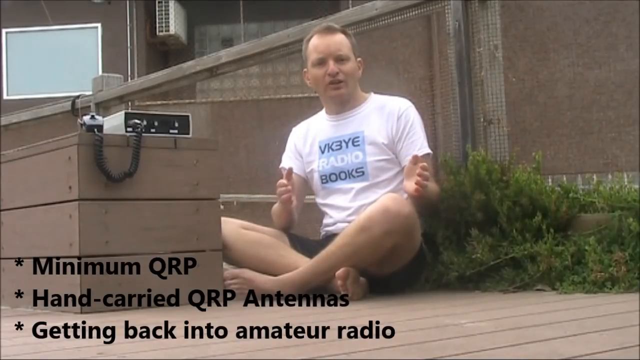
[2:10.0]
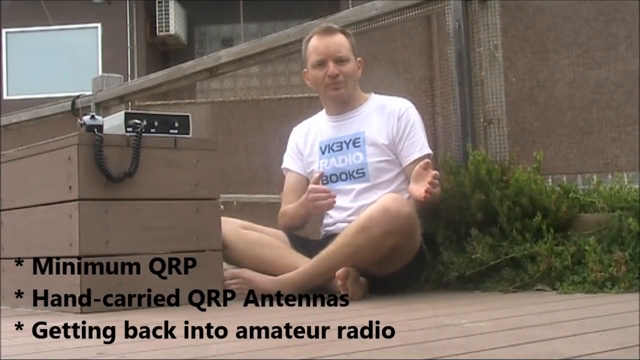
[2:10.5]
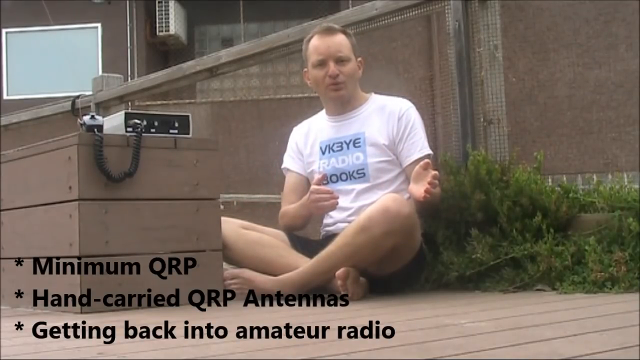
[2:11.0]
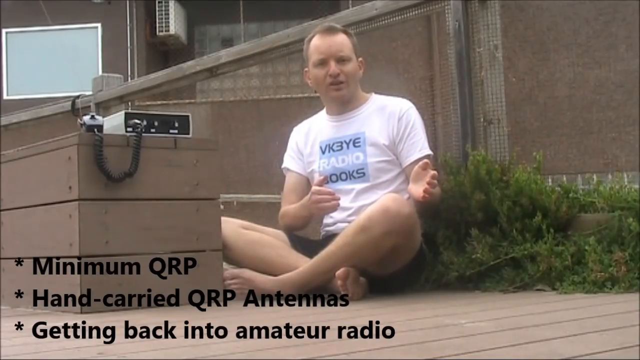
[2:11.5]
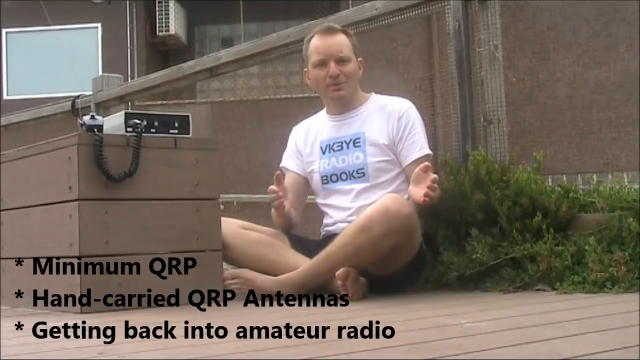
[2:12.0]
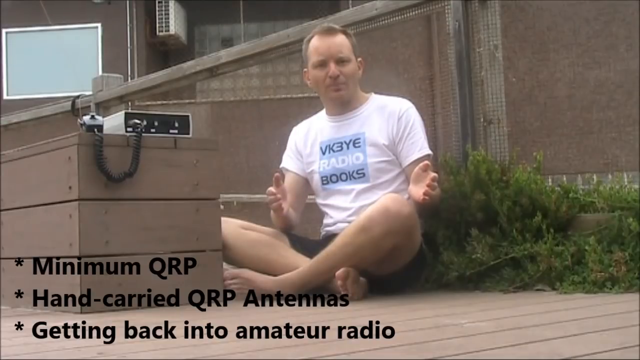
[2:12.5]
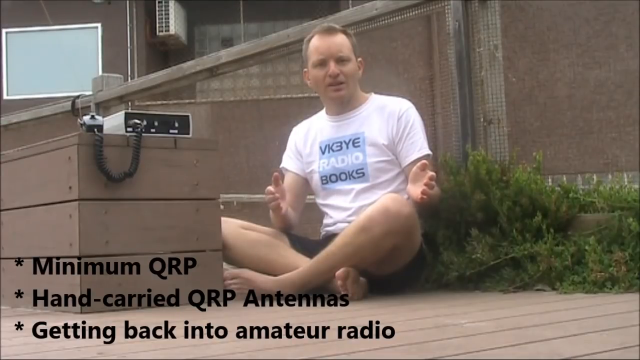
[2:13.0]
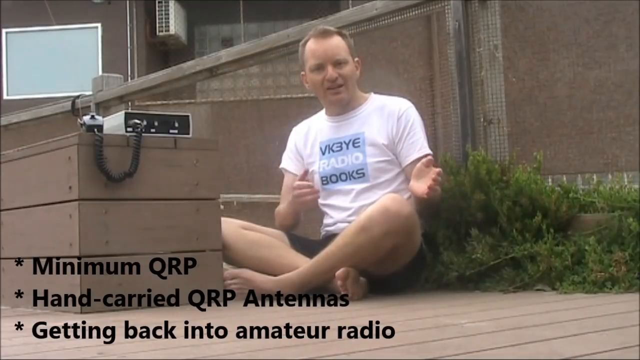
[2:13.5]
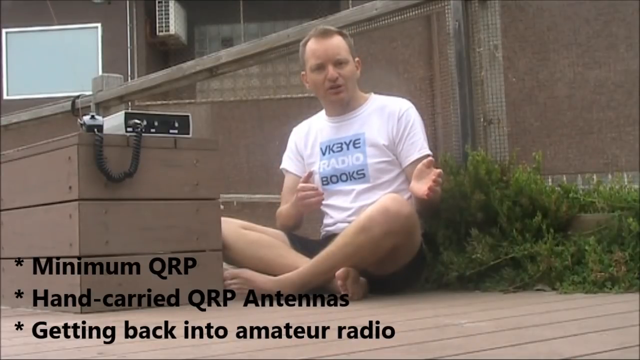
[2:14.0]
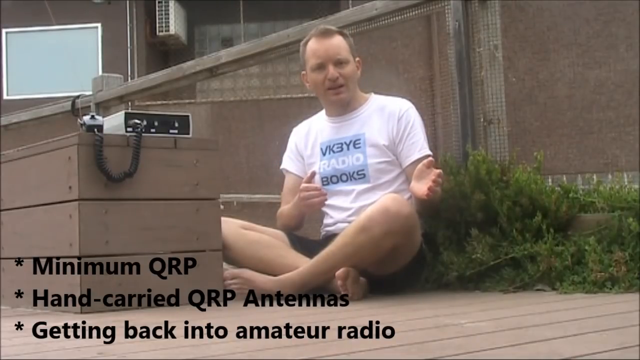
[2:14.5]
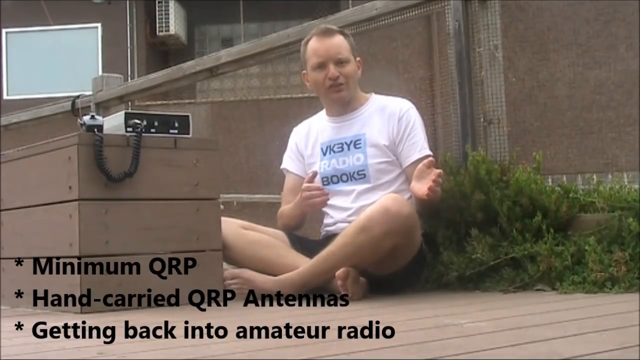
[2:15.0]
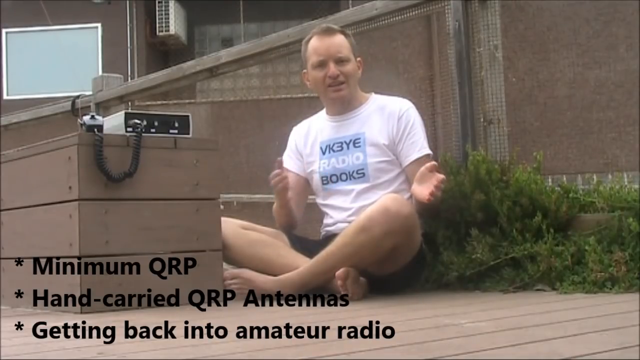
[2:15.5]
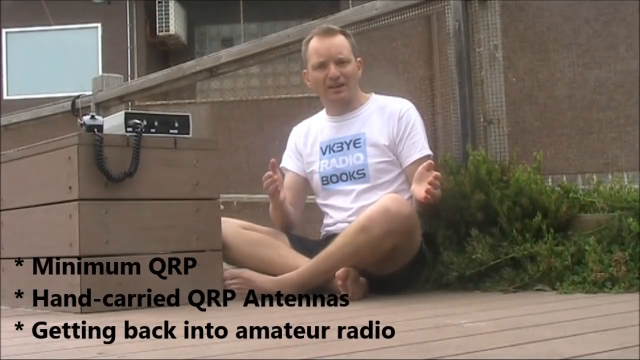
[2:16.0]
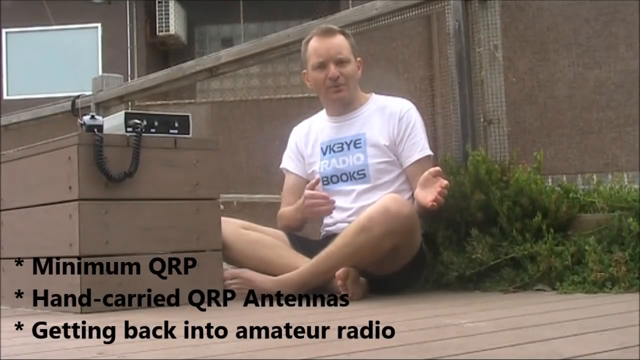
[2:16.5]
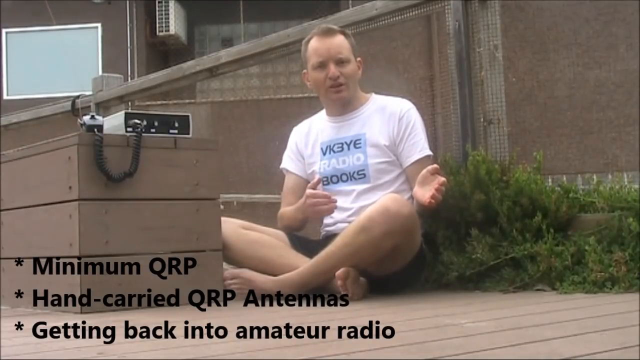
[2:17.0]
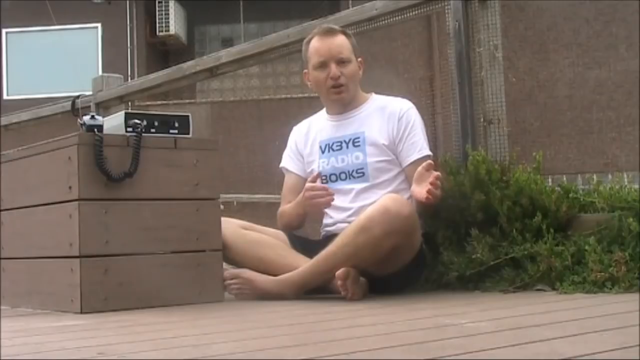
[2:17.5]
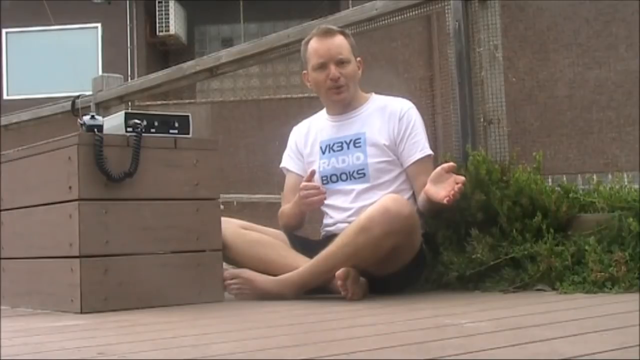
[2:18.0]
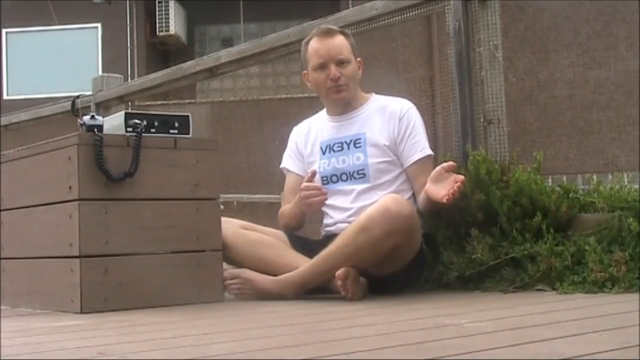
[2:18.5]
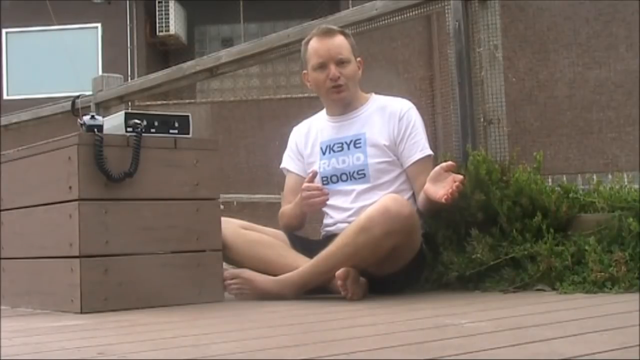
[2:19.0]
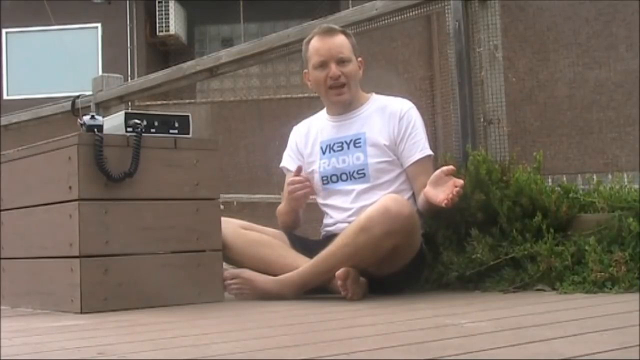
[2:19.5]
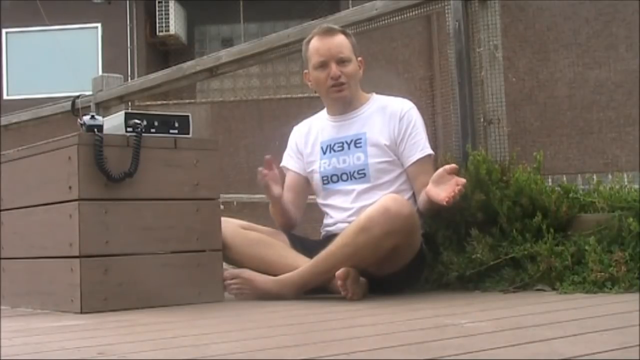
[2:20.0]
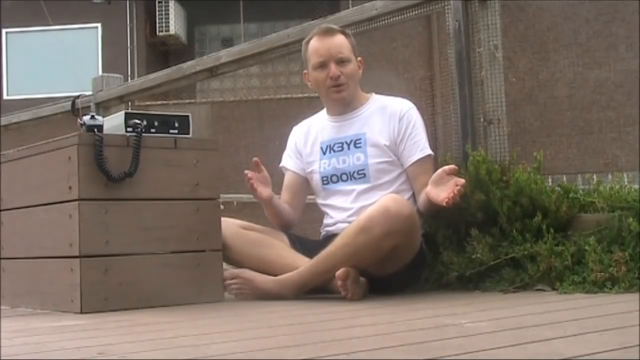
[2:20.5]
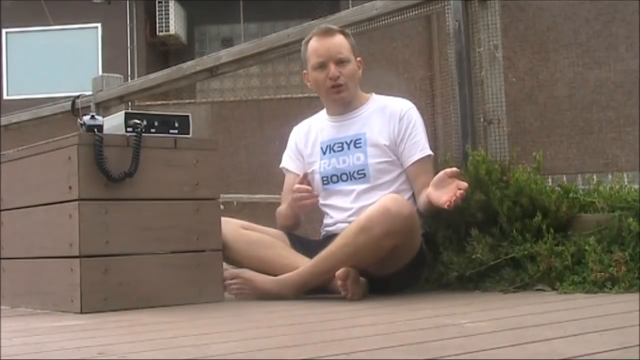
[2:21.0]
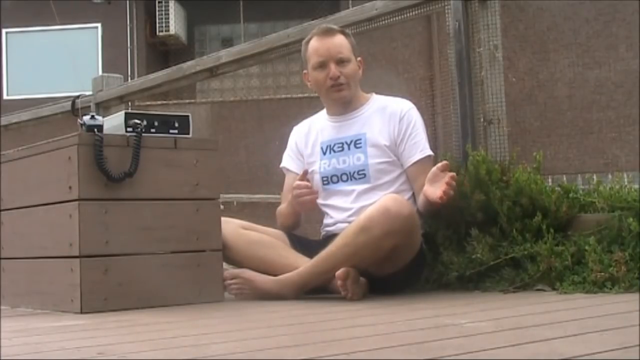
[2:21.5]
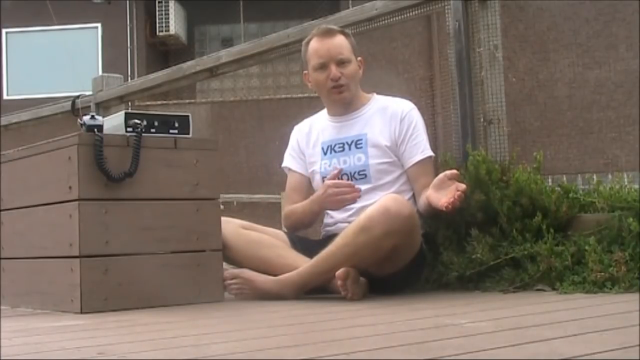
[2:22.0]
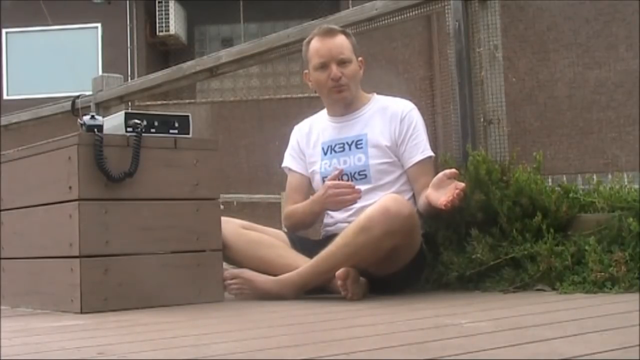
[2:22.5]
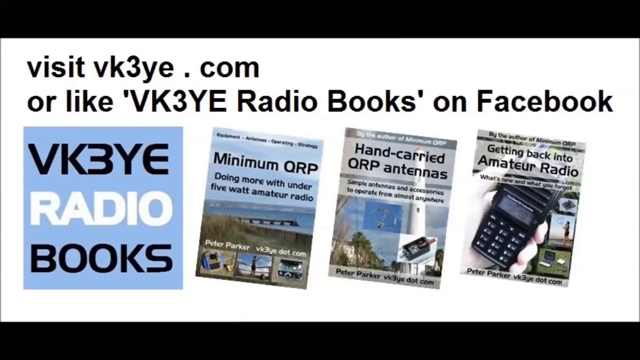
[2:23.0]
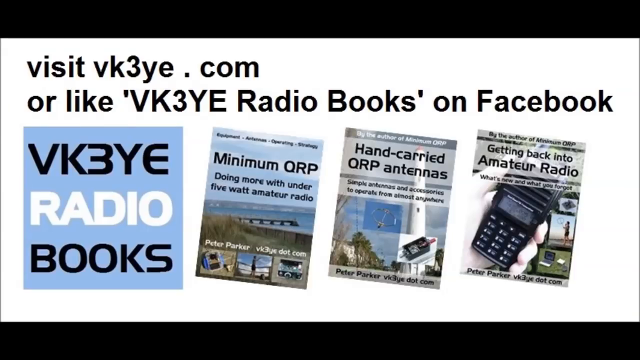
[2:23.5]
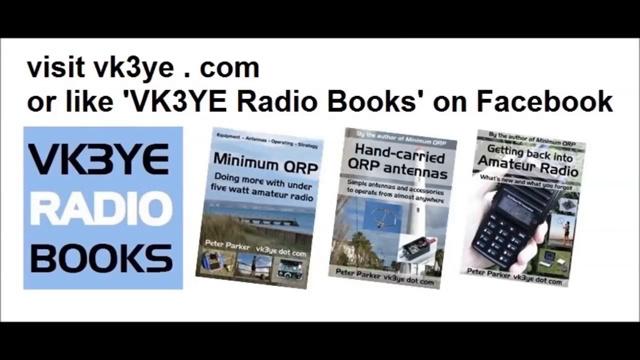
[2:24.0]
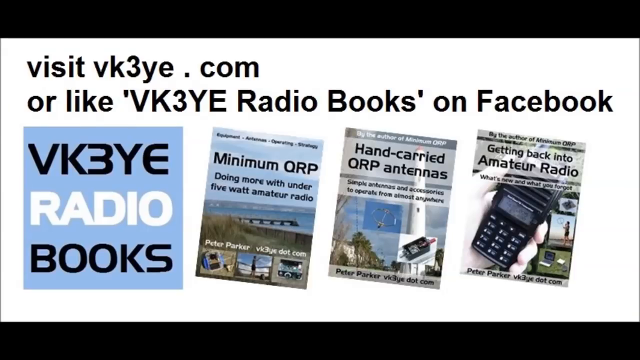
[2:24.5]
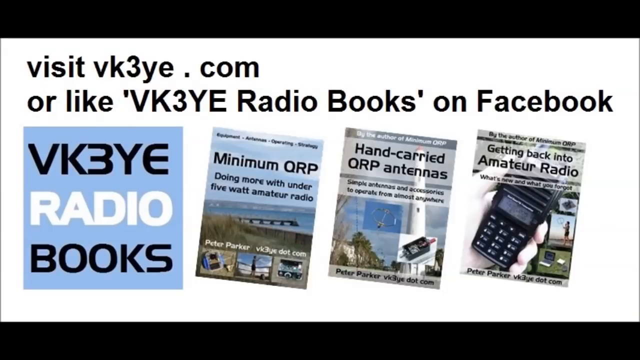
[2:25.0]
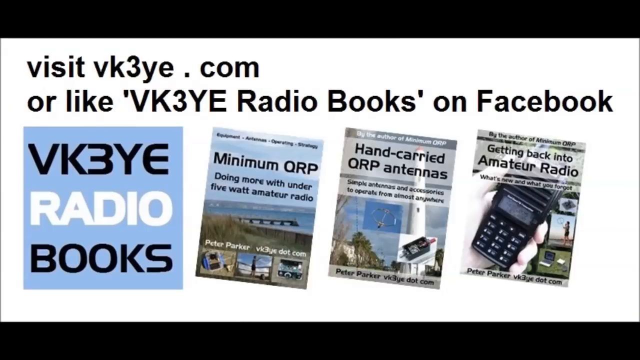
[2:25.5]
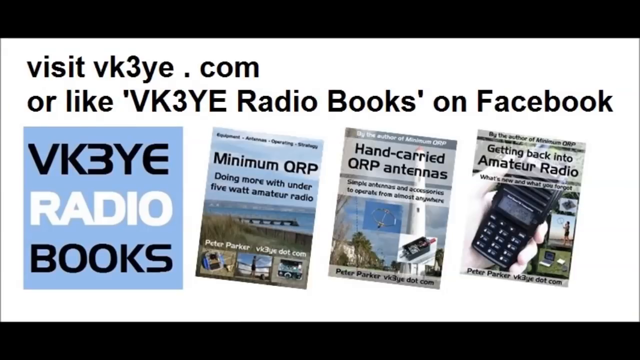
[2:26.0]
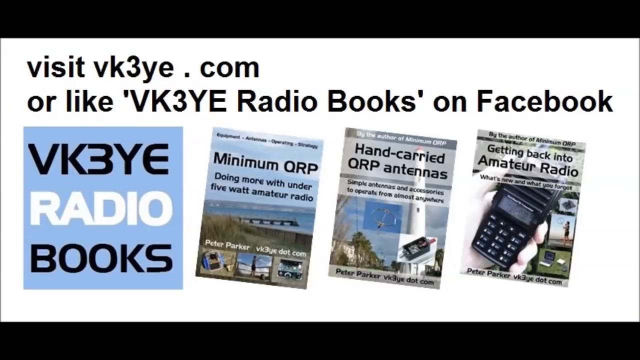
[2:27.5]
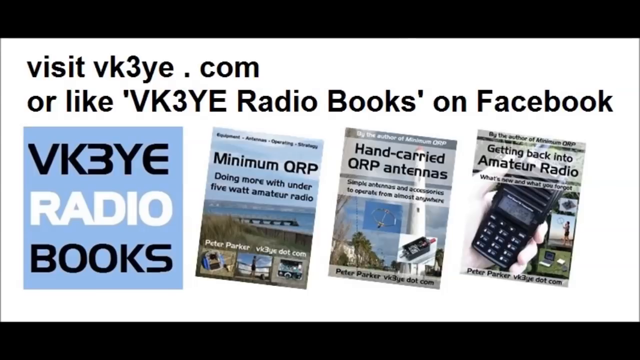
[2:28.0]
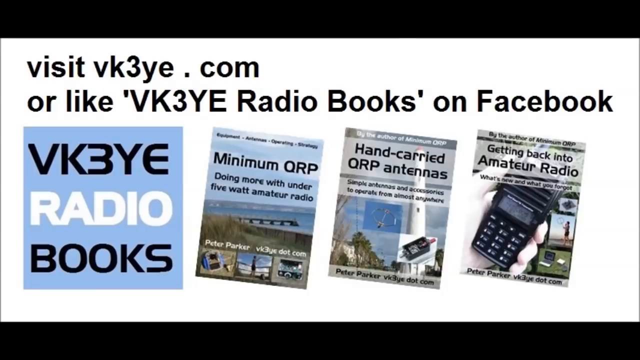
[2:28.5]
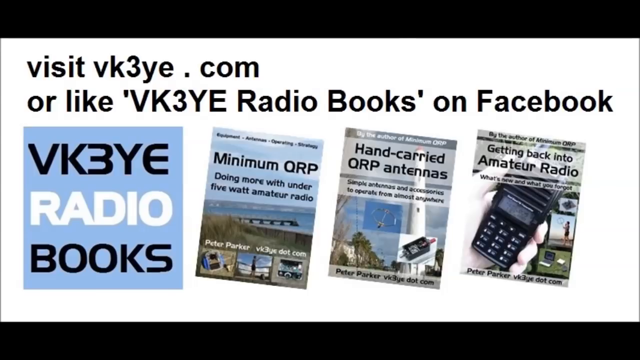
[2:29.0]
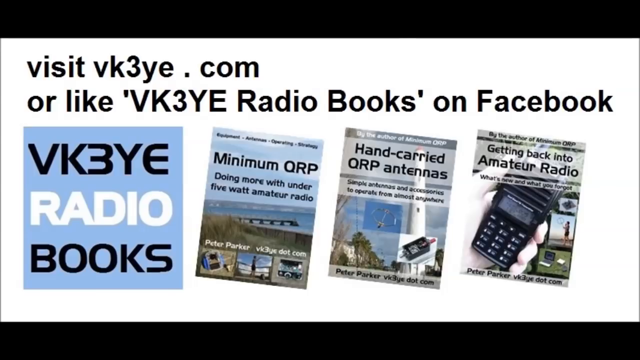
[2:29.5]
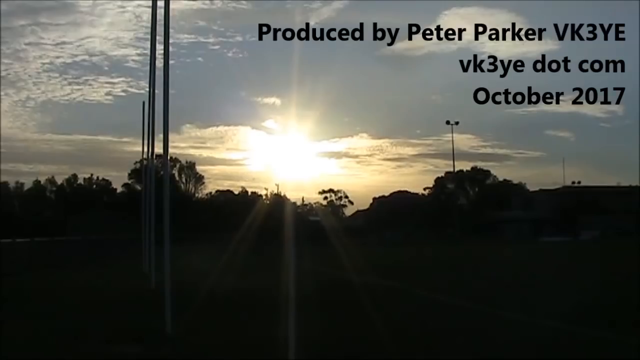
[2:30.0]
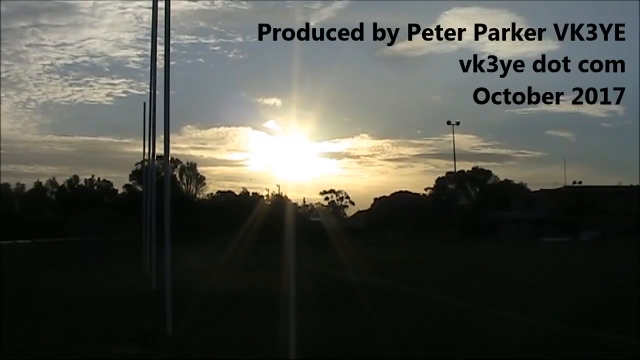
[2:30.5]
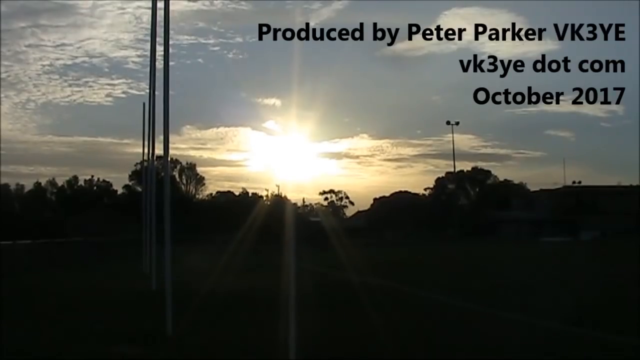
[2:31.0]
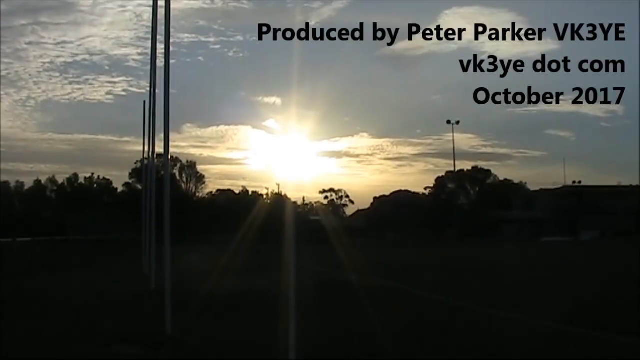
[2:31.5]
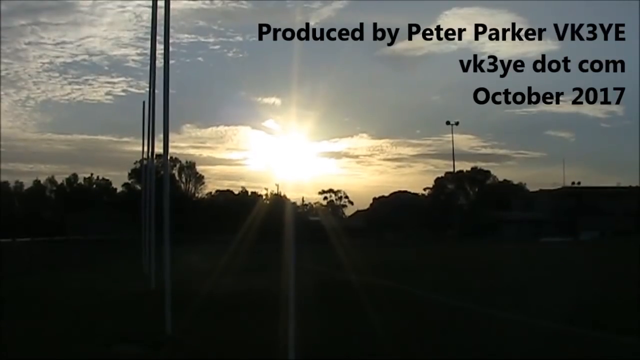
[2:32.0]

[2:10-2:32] The man is now in a different place, maybe his house, where everything around him is a dark beige colour. He wears a white shirt that says "VK3YE Radio Books" in blue, has balding light brown hair, and now wears different shorts that appear to be black. He is sitting in a low bush, kind of, with a box in front of him on a sidewalk. The box is made of wood slats painted the same dark beige as the house, and on it is a rectangular device with an old-fashioned coiled telephone-style cord coming out of it. On-screen text reads "minimum QRP," "hand-carried QRP antennas" and "getting back into amateur radio," while he talks with his hands. Then a scene says "visit vk3ye.com" and something like "VK3YE Radio Books on Facebook," shows the same logo as on his shirt, and shows three different types of books available to order.